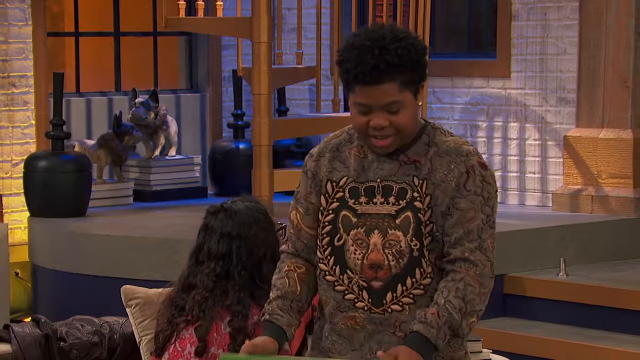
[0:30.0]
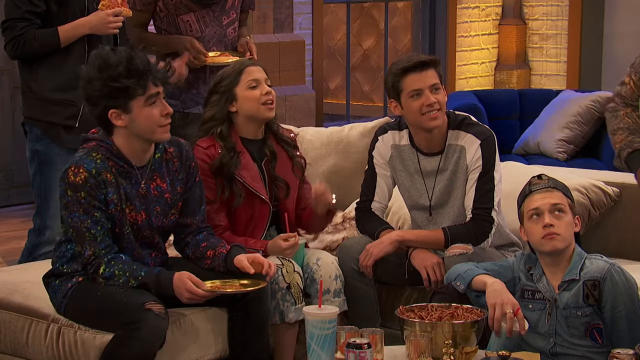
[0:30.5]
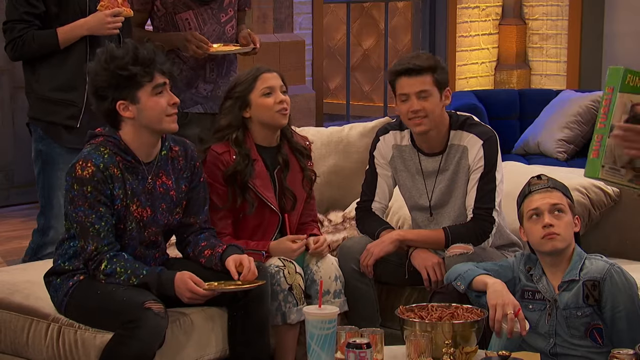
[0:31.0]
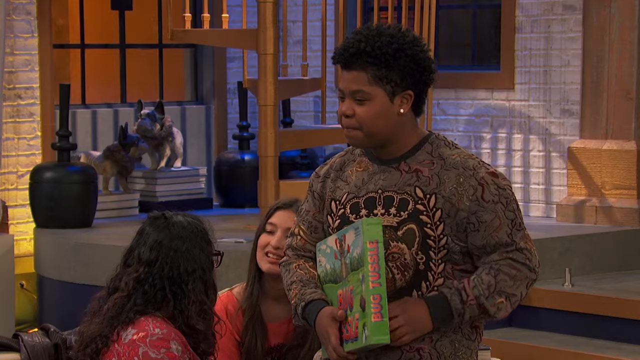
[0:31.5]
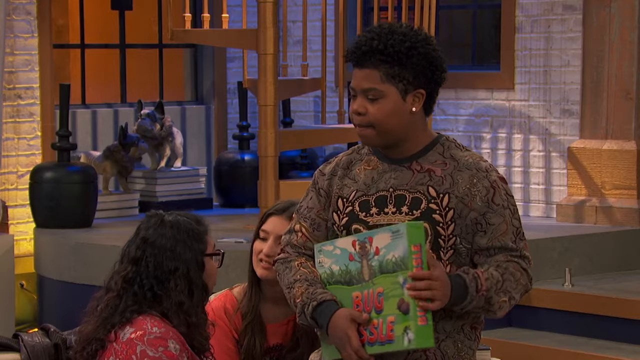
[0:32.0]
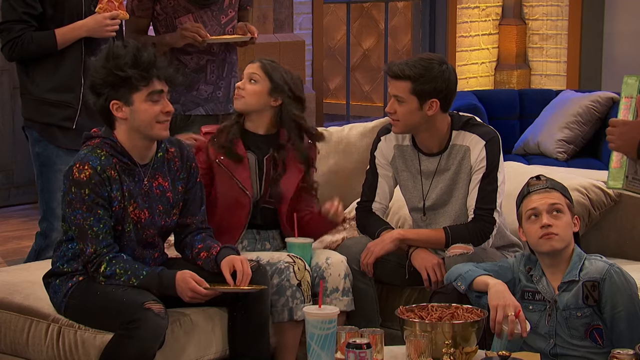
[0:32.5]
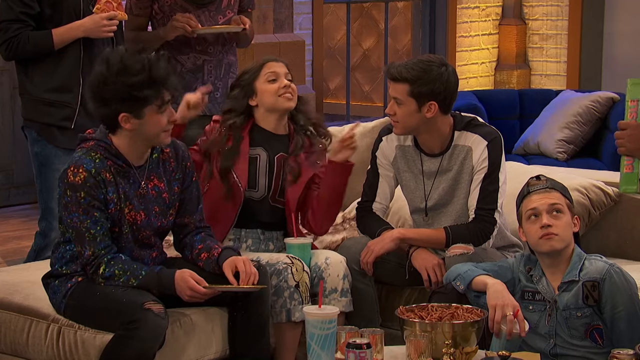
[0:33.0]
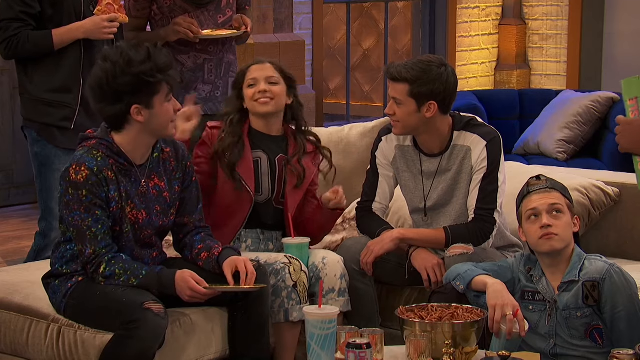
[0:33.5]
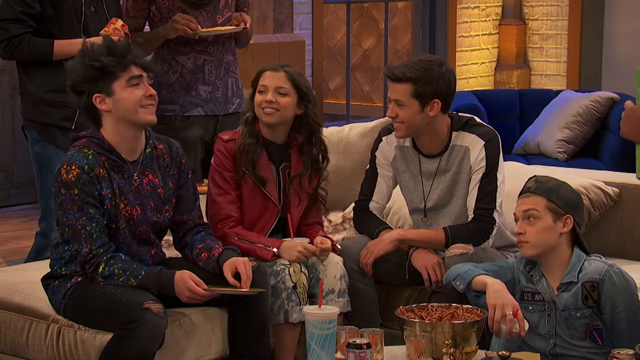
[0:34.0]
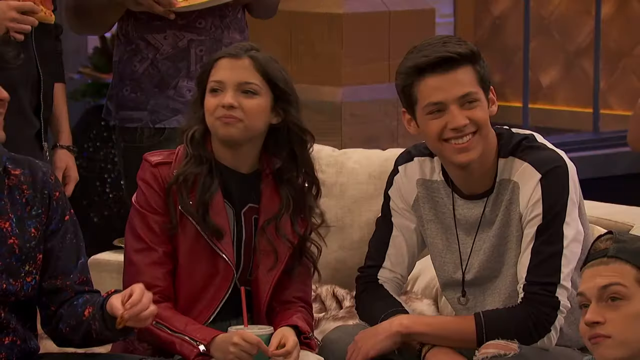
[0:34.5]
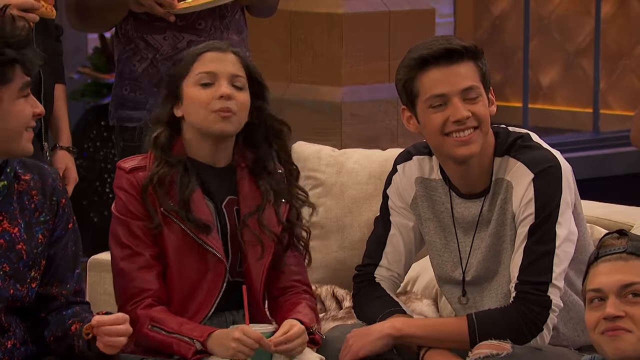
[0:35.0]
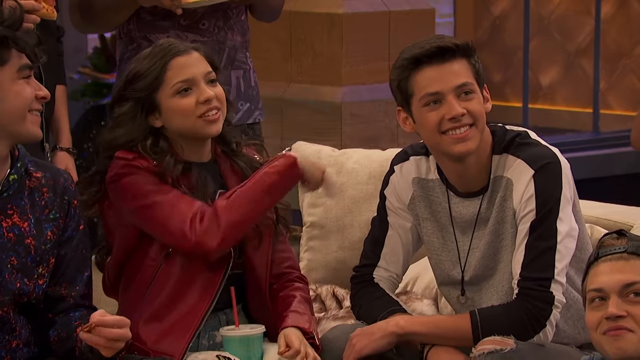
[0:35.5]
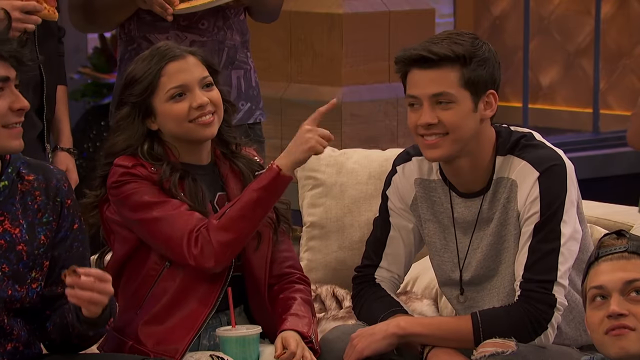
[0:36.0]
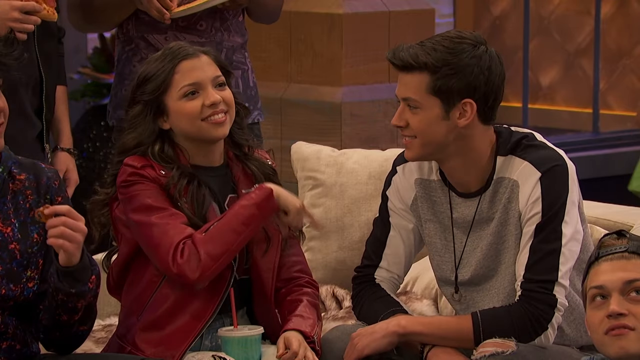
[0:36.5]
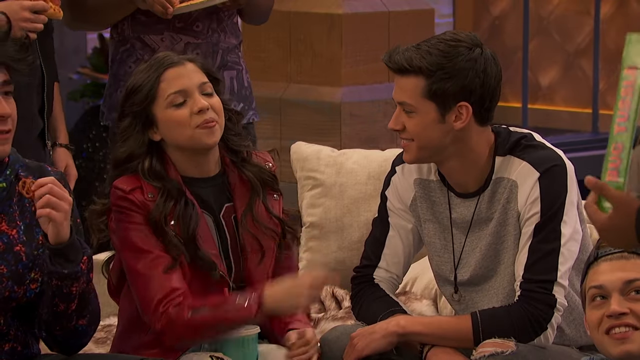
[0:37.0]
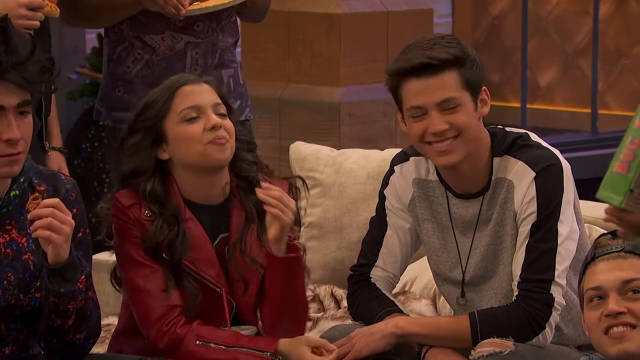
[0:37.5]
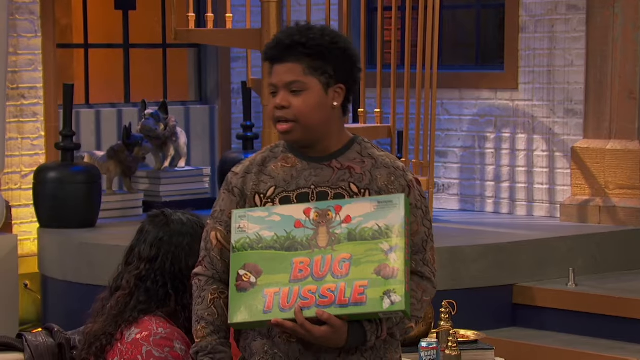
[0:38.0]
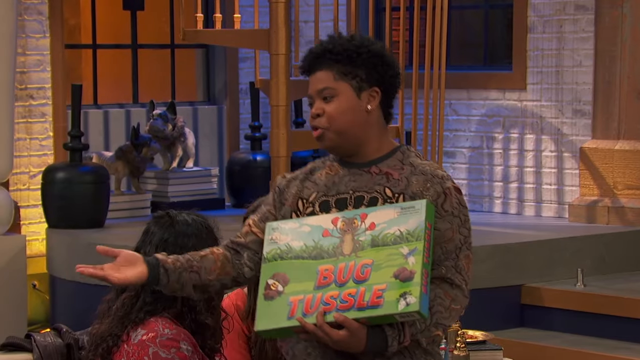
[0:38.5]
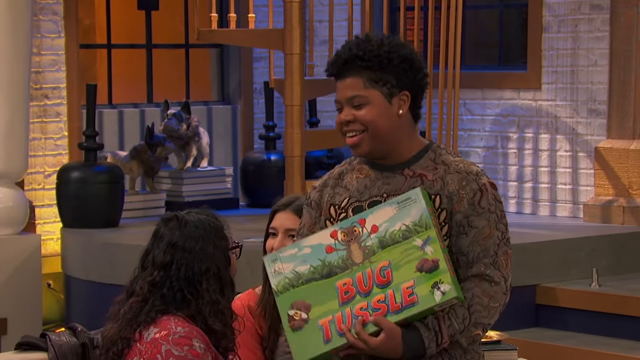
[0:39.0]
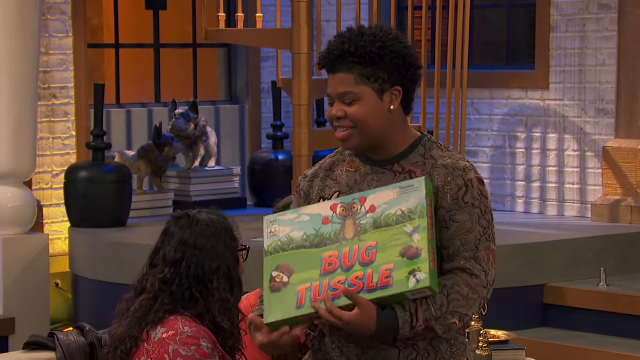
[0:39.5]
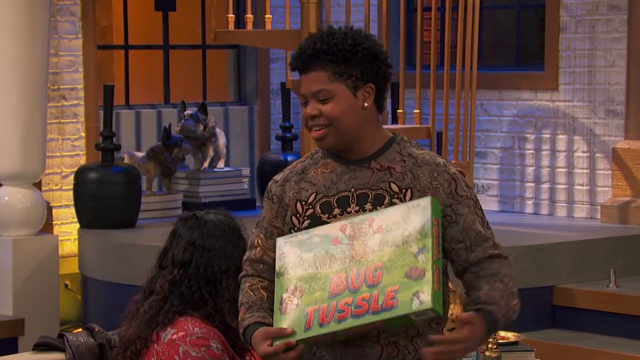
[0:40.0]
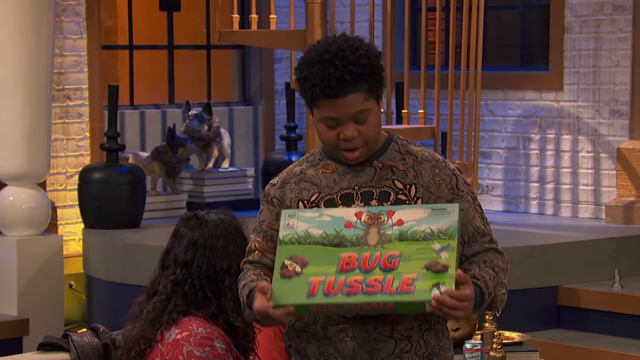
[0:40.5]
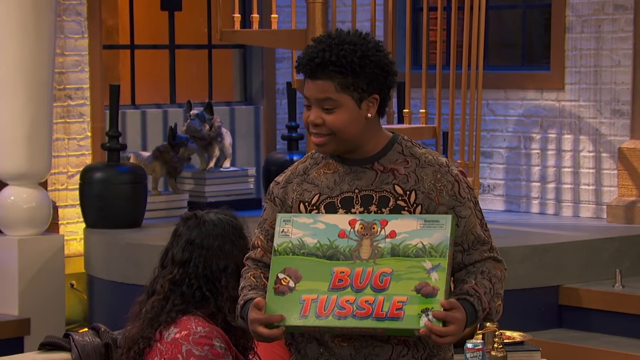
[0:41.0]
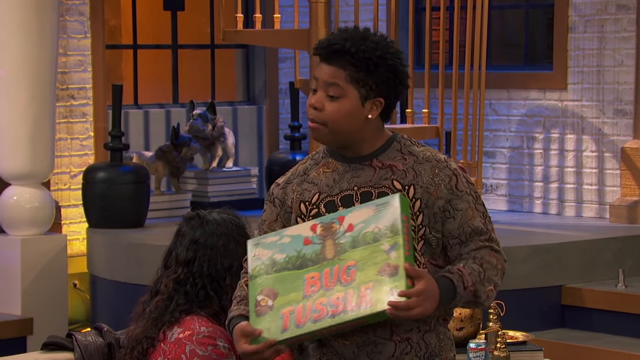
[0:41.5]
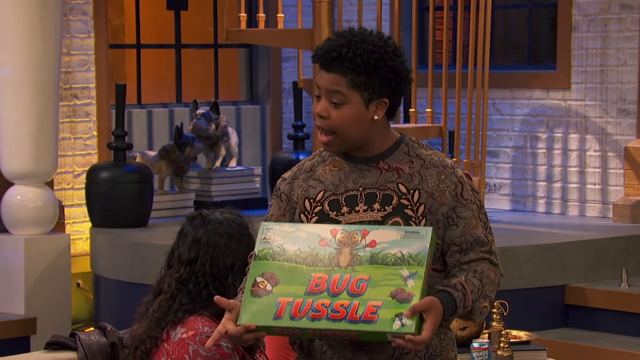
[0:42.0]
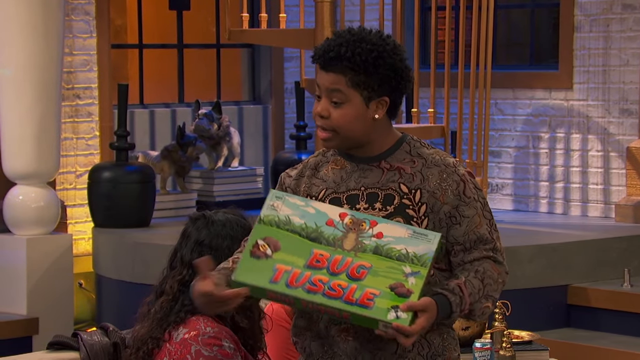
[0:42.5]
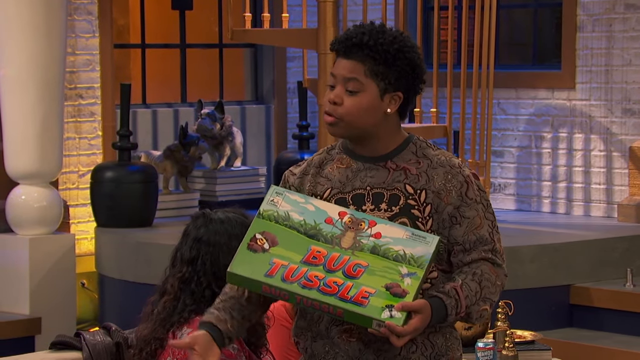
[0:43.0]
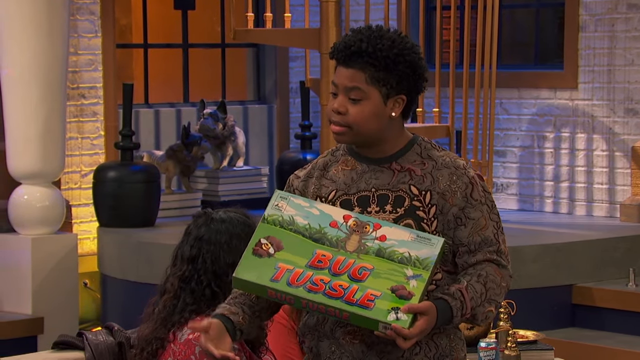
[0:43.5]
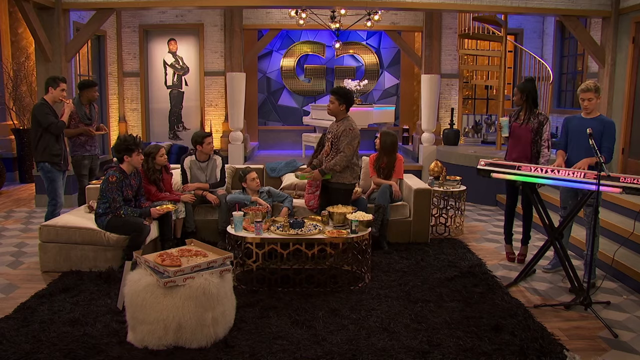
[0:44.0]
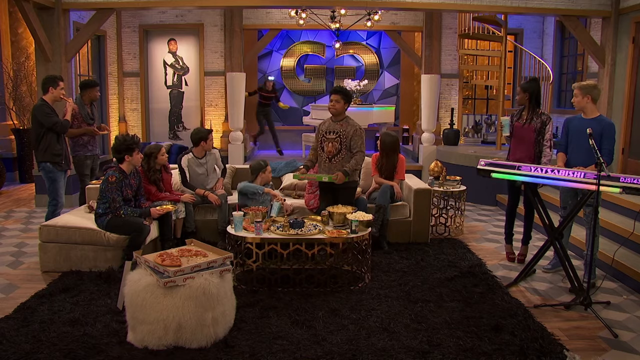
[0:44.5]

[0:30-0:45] The teenagers are sitting around discussing a situation. The younger African-American individual appears to be trying to convince the other visitors to engage in something called "bug tussling", which appears to be a board game. They talk back and forth, and it appears that no one is interested in playing the game. The kids are all very engaged but do not appear to want to play.